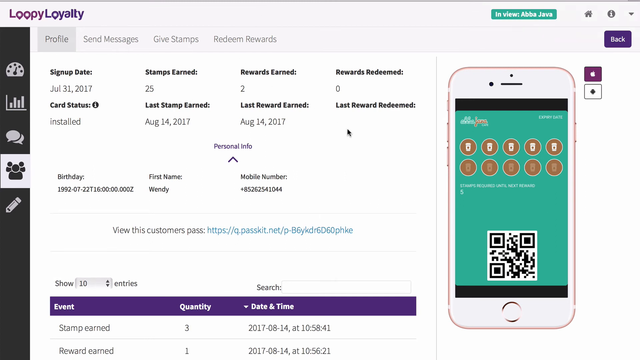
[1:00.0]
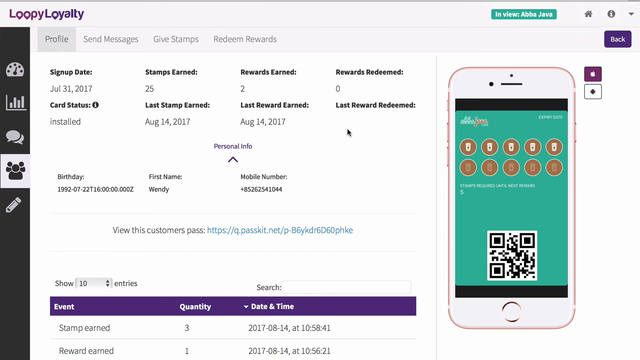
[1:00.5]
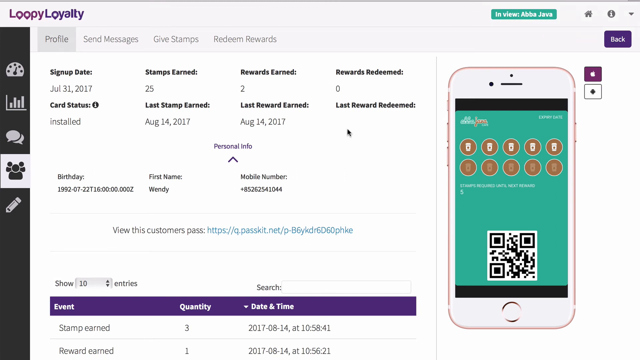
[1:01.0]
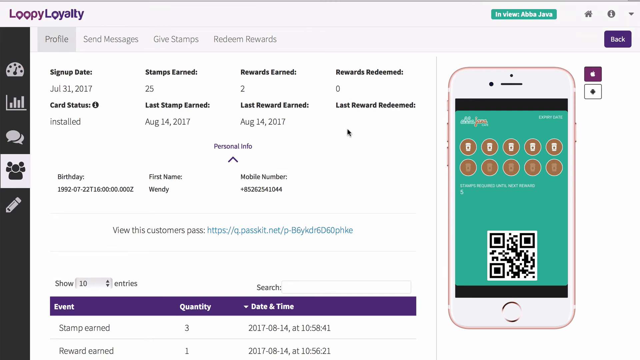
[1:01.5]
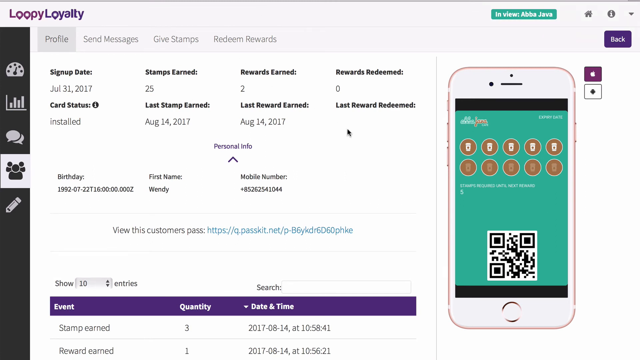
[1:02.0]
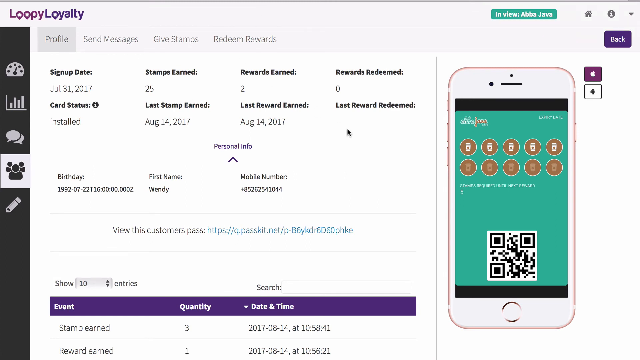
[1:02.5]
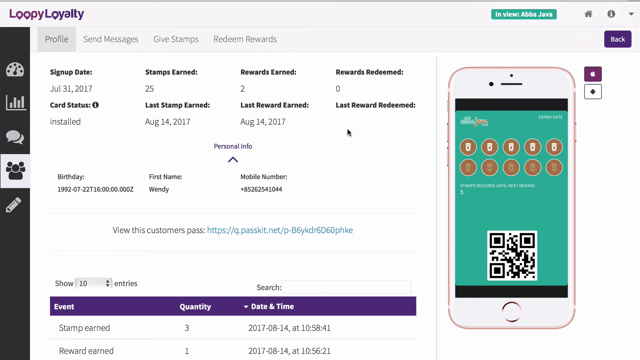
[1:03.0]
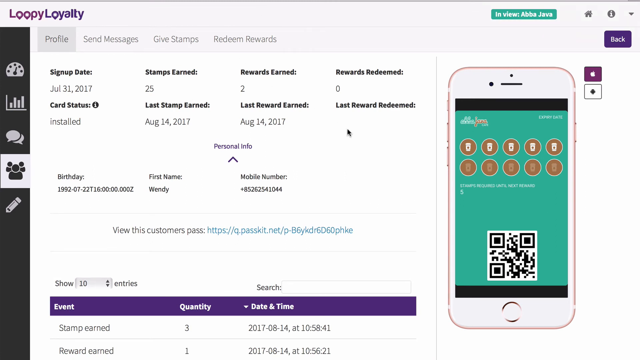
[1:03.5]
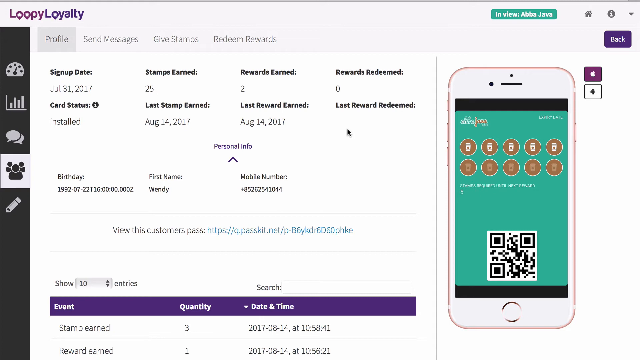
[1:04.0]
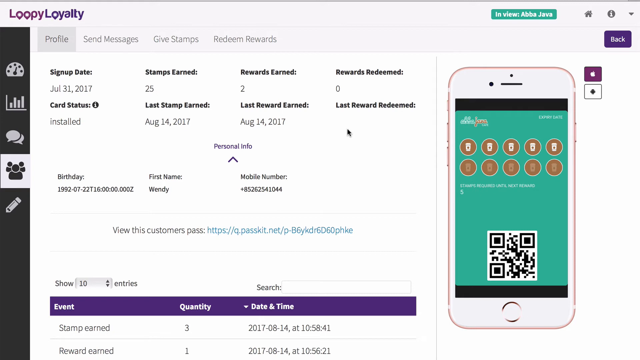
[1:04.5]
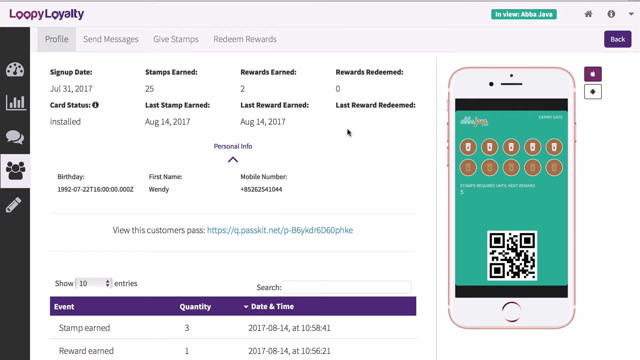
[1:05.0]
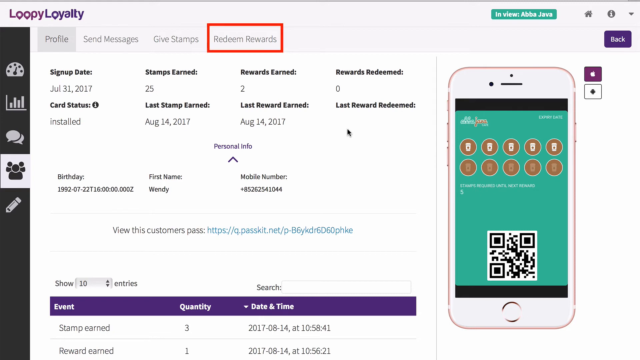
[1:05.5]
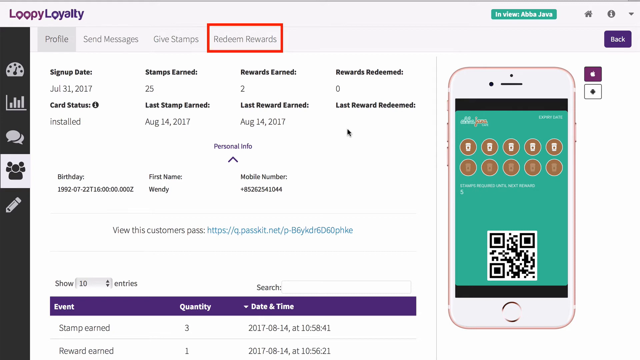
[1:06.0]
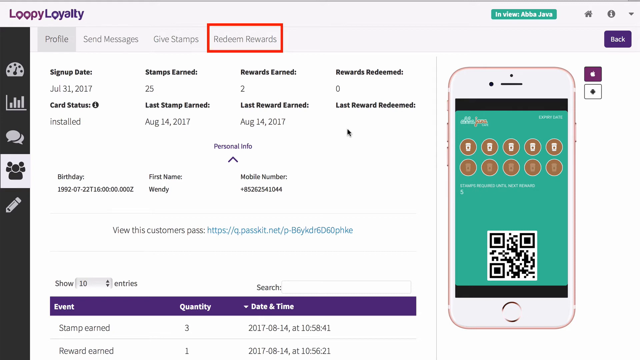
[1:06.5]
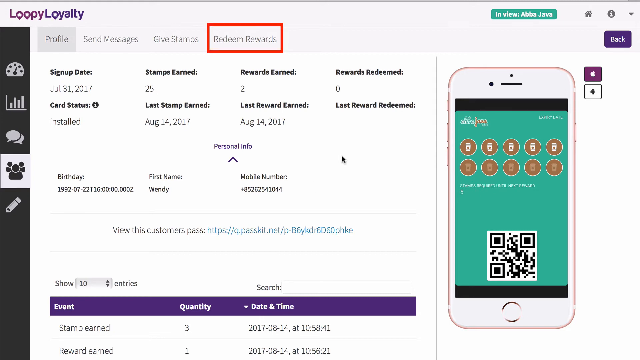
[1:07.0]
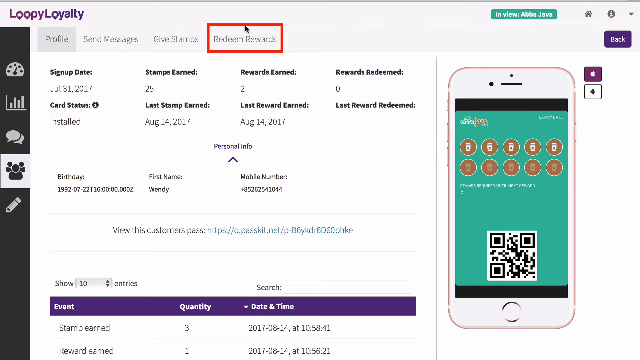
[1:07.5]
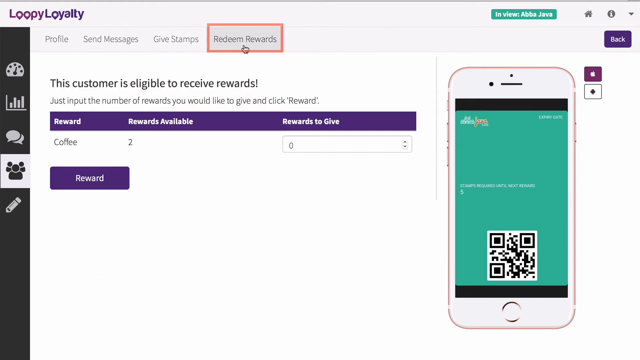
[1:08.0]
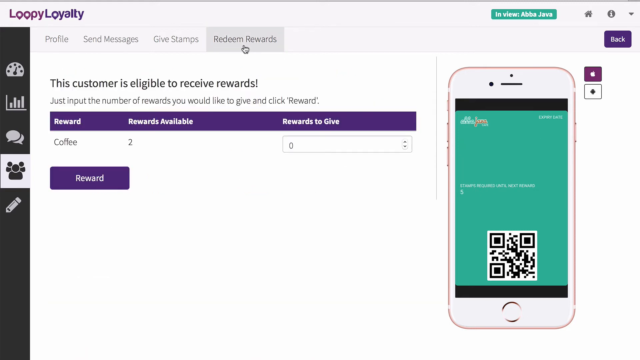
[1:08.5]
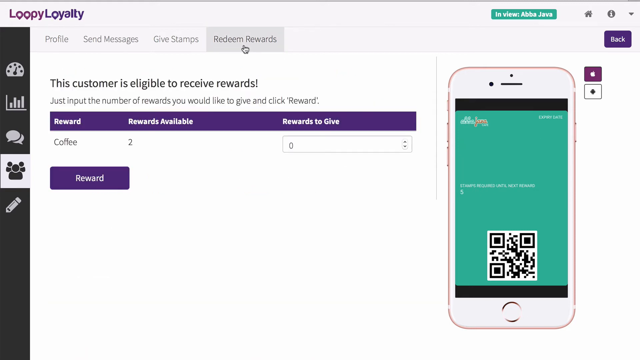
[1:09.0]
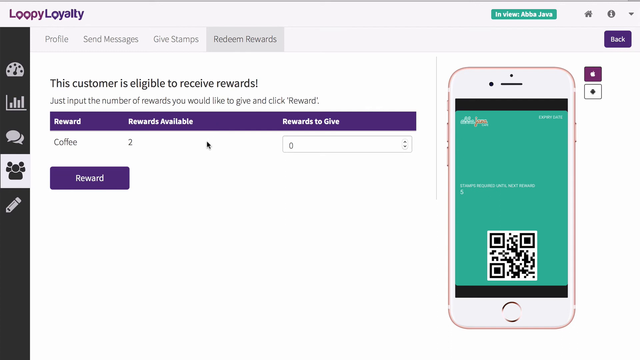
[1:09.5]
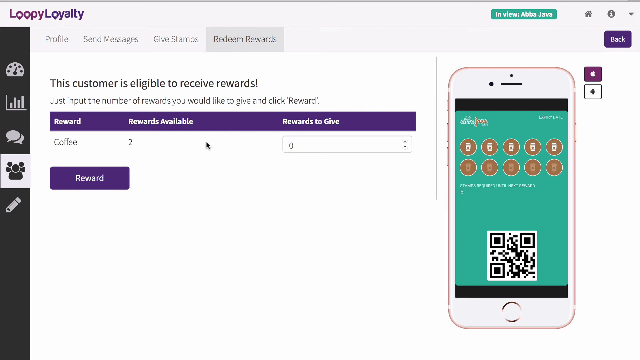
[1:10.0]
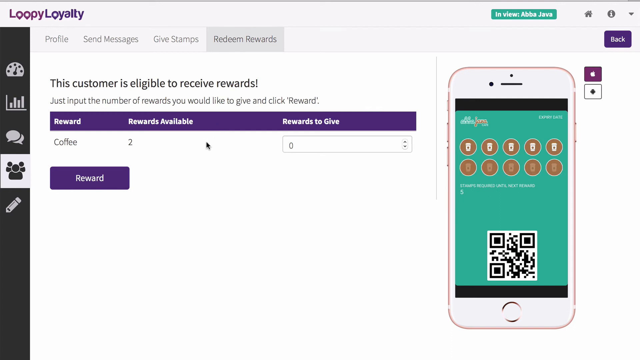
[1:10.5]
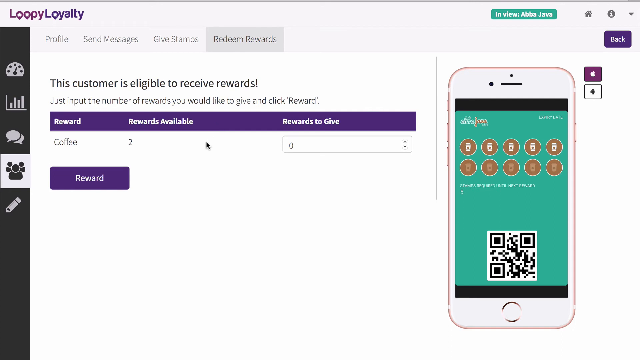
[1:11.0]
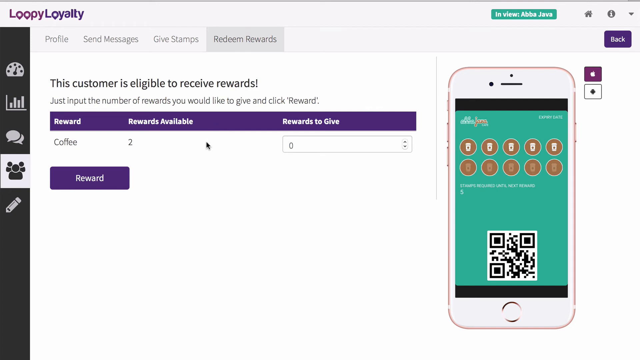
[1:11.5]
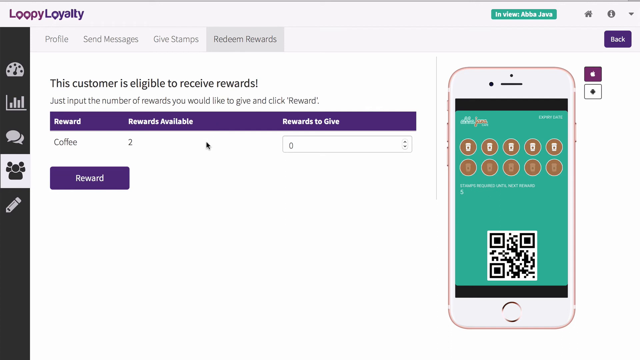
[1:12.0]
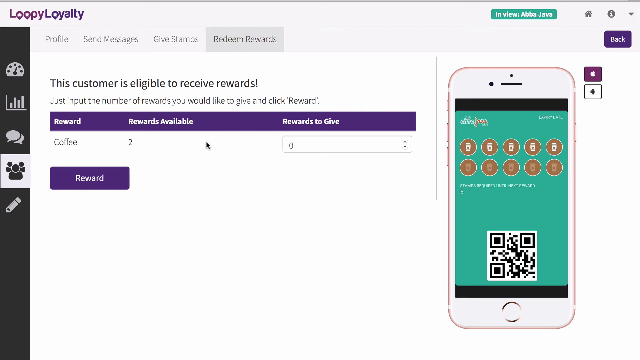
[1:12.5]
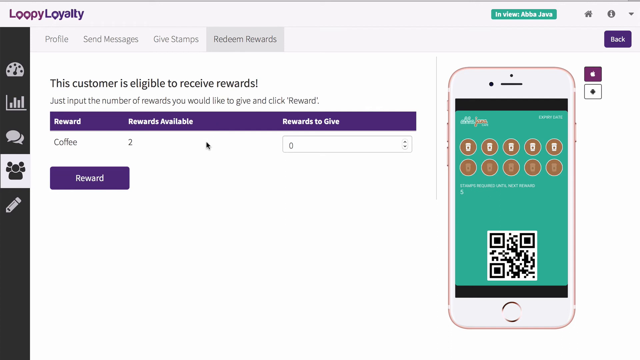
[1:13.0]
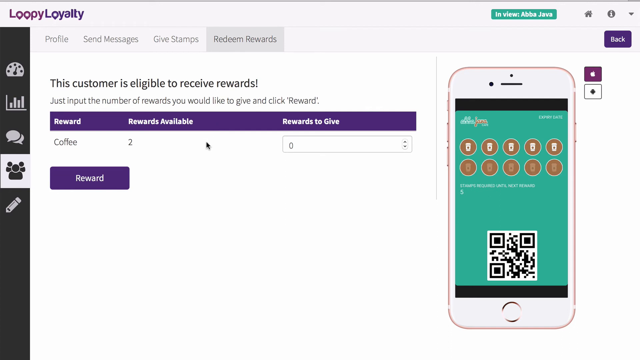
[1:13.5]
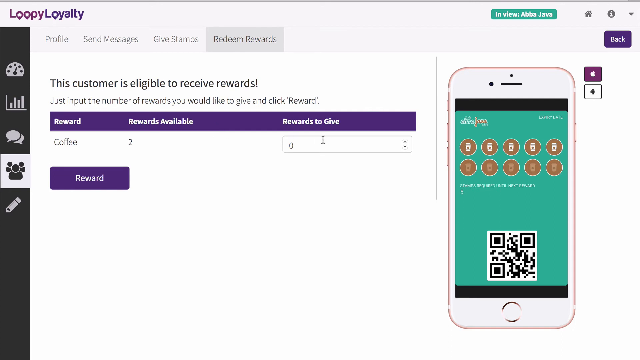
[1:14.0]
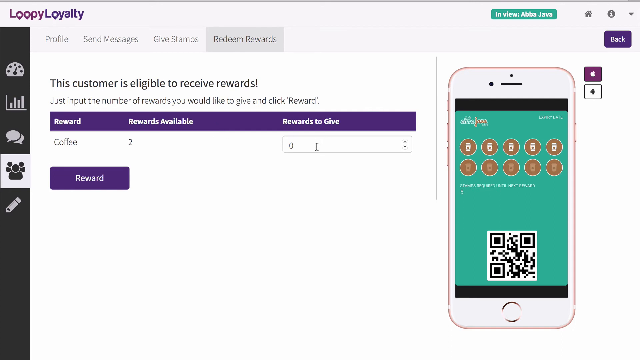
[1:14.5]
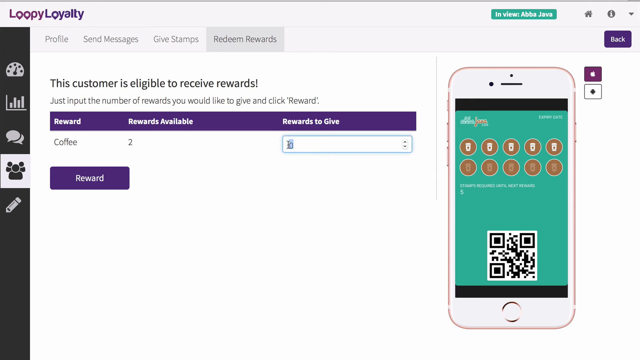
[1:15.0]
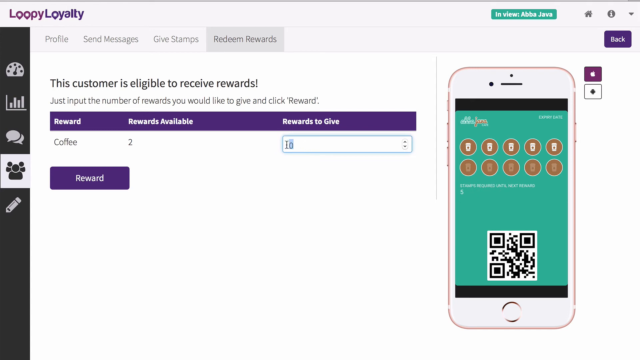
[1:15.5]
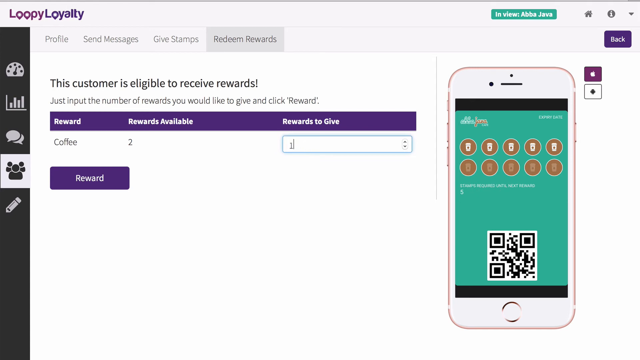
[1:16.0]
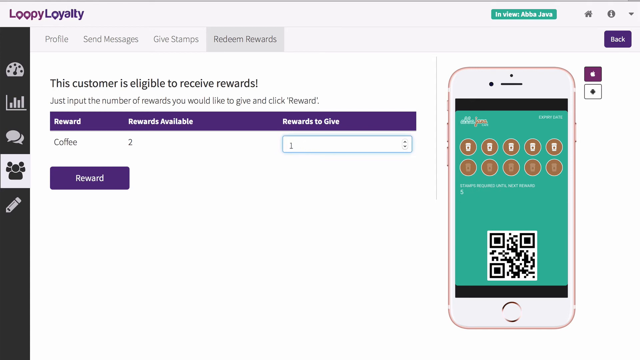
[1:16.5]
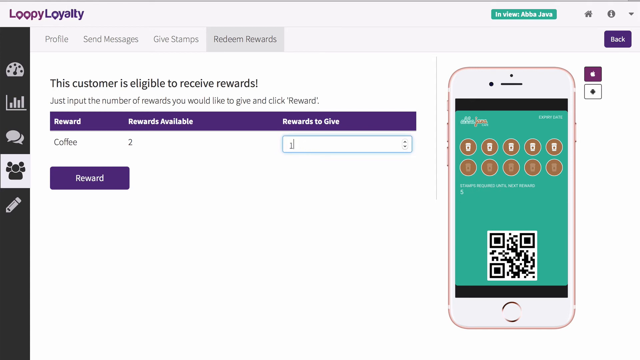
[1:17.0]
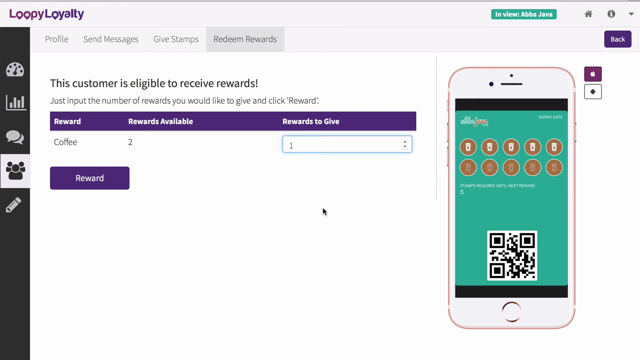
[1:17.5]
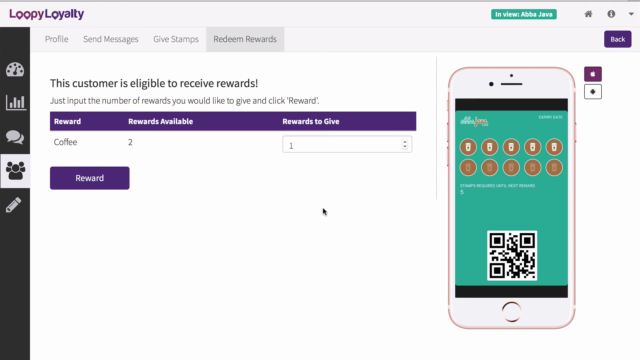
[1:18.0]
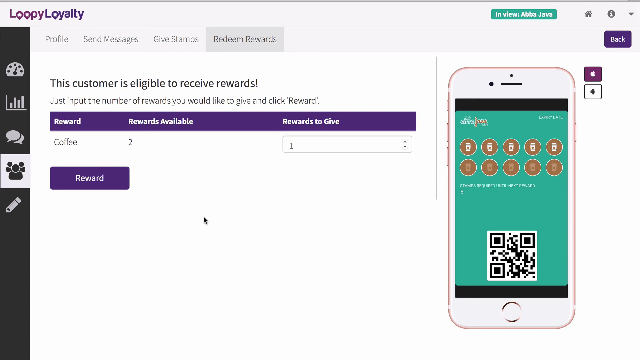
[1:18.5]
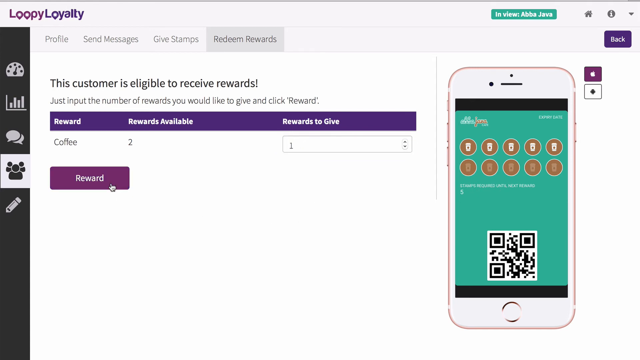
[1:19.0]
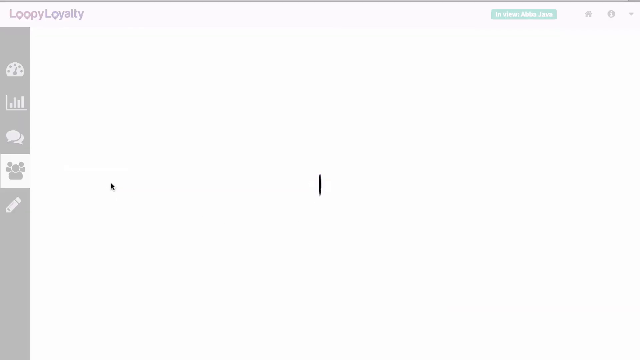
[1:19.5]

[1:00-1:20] The homepage of the Loopy Loyalty Rewards app is shown. In the top left-hand corner is the purple Loopy Loyalty logo, above a dark grey sidebar with five icons, and a pale grey line of tabs with the profile tab highlighted in a darker grey. The customer profile information is displayed, and on the right-hand side is an image of a phone whose screen shows the app: a green background with five circular logos showing the number of stamps, five of which are now highlighted in deeper white. Below this is a black and white QR code. The screen is mostly still, but then a red rectangle appears on the "Redeem Rewards" button. This leads to a new screen showing that the customer is eligible to receive rewards. The number one is typed into the button and submitted to give this extra reward to the customer's account.